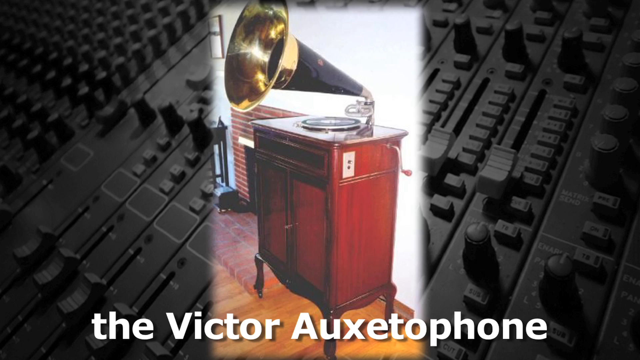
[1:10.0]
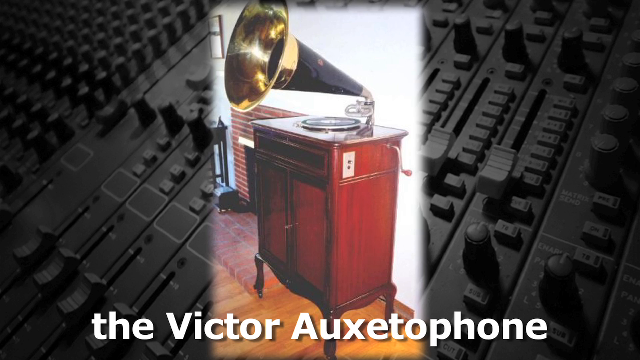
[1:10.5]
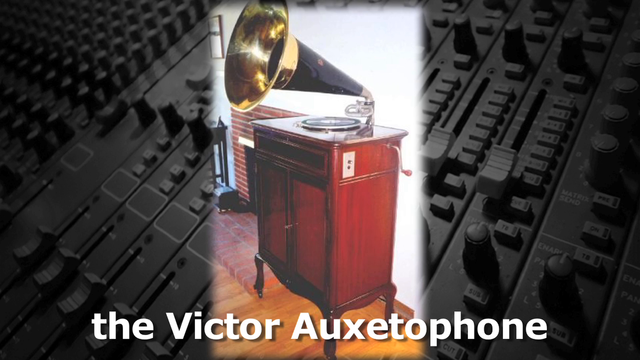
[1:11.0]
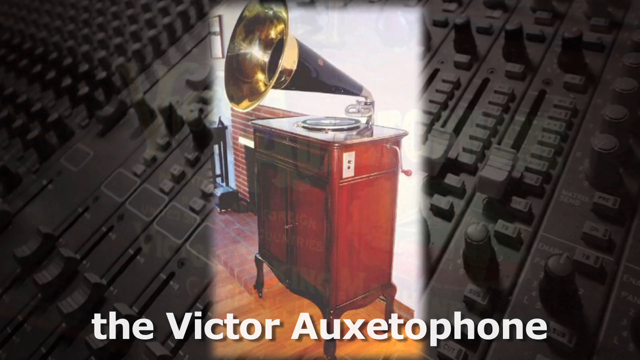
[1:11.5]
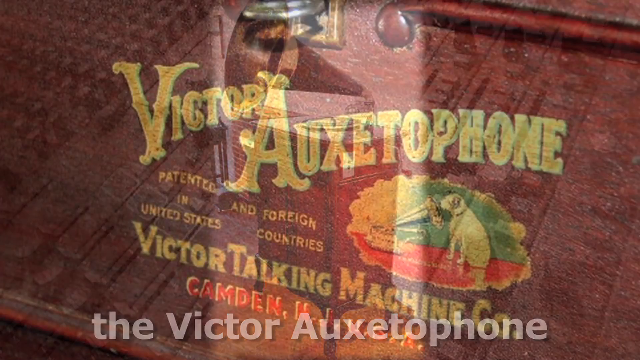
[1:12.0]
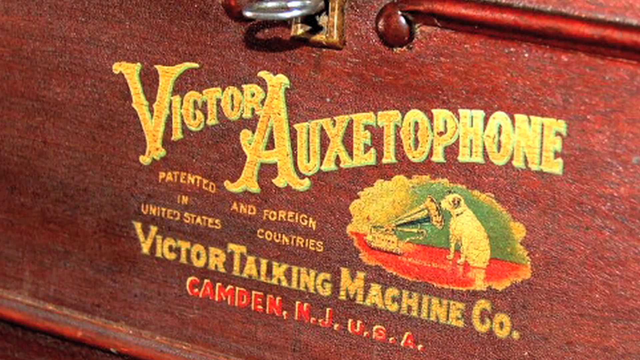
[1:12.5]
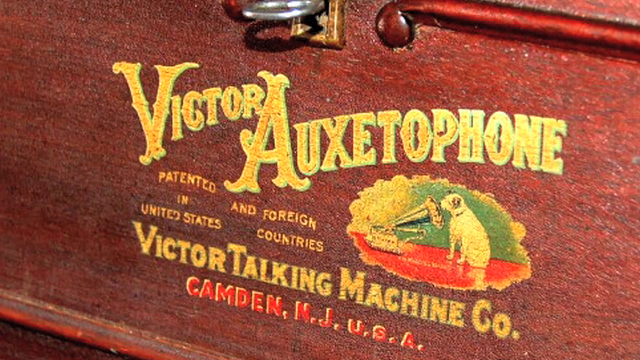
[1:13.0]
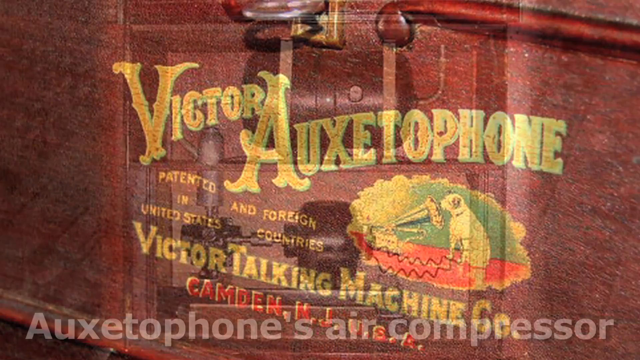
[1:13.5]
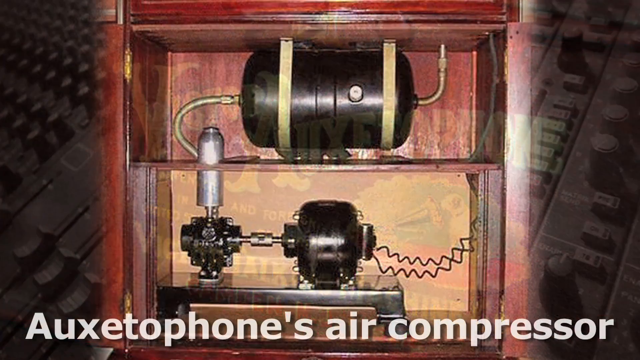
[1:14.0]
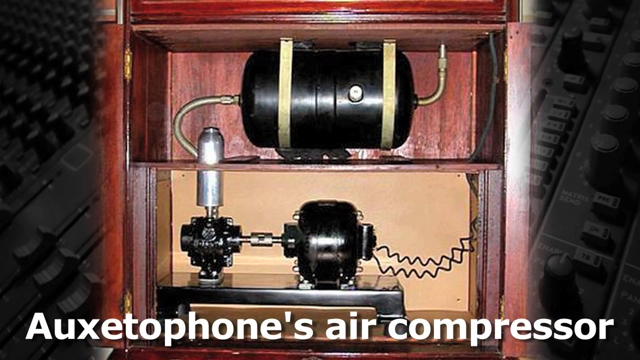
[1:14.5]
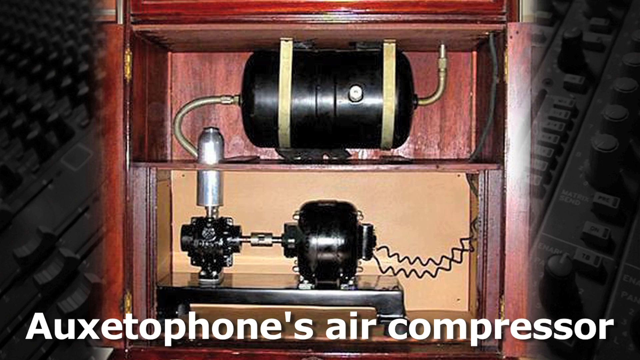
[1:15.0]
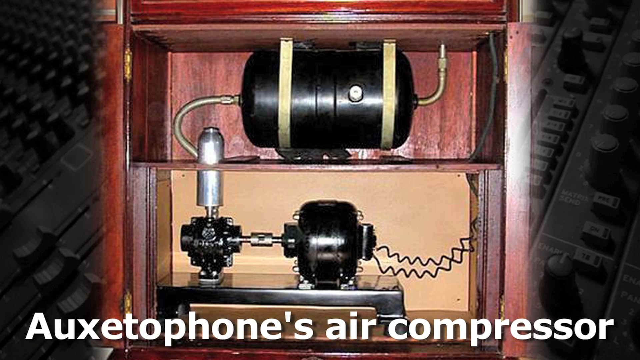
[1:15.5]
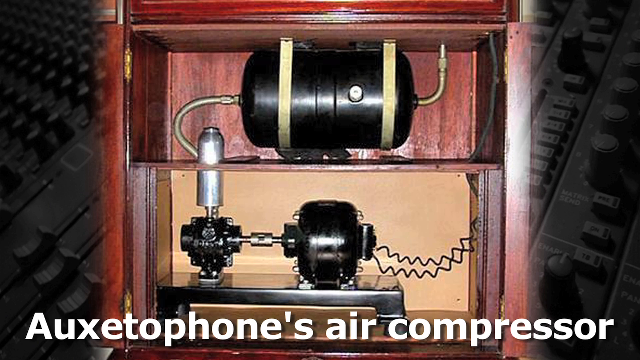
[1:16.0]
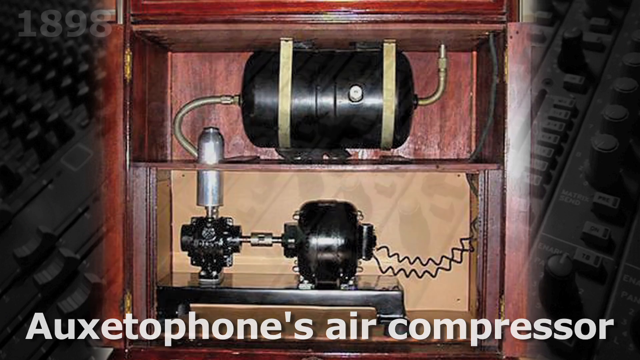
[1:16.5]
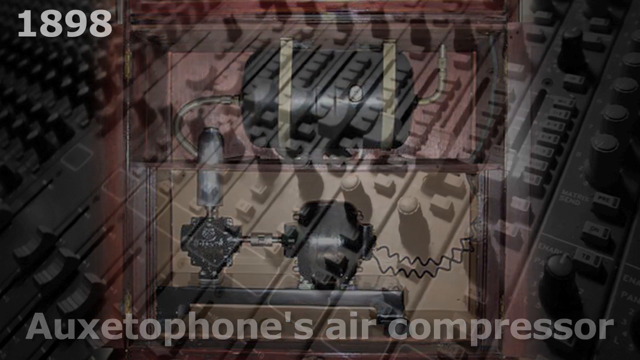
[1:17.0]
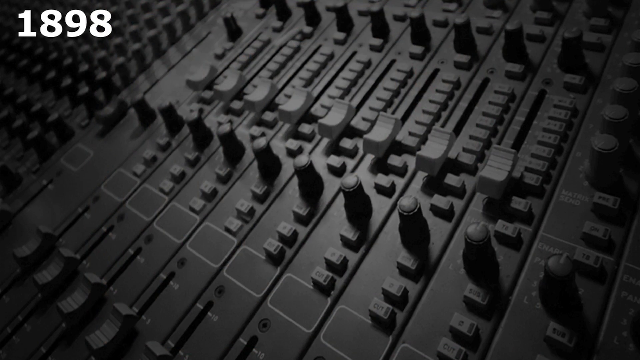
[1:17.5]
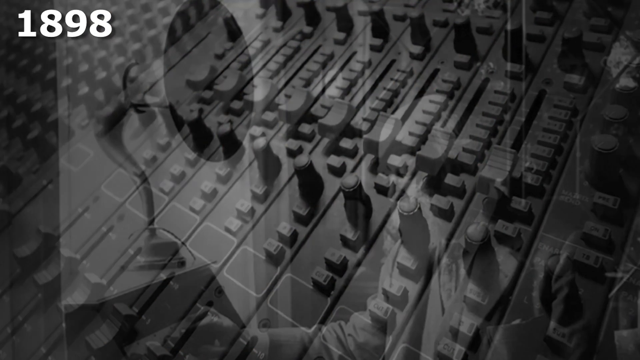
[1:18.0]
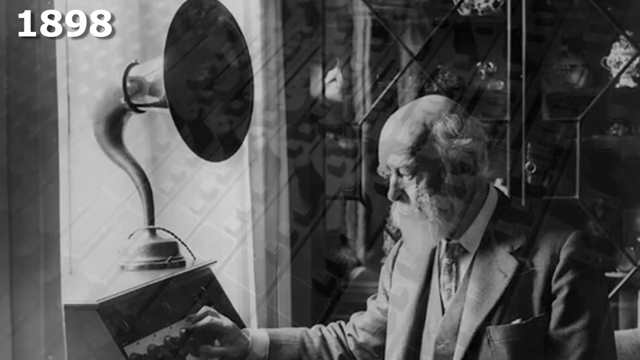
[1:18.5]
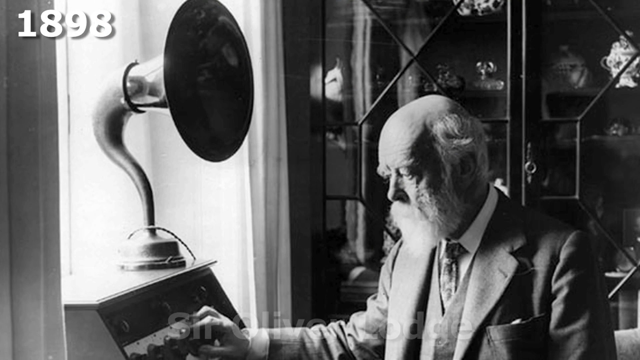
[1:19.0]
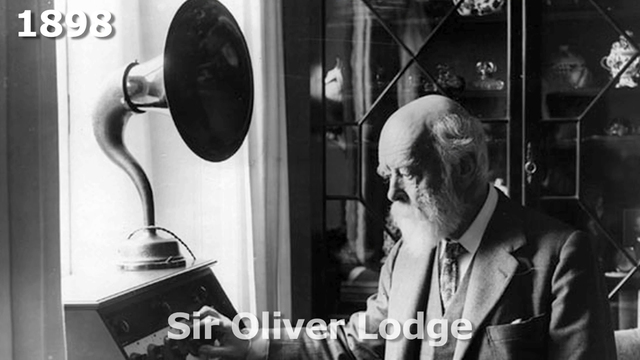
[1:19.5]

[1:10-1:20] Different images of the Victor Auxetophone appear. The first is a big shelf antique speaker phone that looks like a wood shelf with what looks like a record player on top. A close-up shows the text on the box: "Victor Talking Machine Camden, USA. Patented in the United States and Foreign Countries." A small picture of a speaker in front of a dog appears to the right of the box. The image changes to the inside of the speaker box, showing the Auxetophone's air compressor: a big black cylinder on top leads left and down to a machine, and another small cylinder is at the bottom. A new music speaker phone from 1898 appears, with Sir Oliver Lodge, apparently a contributor to this version of the speaker; he is an old man with a long beard.